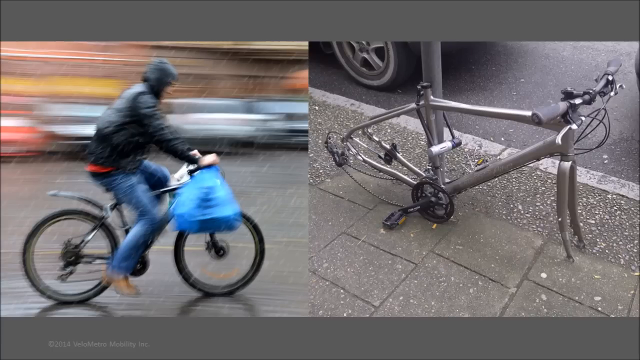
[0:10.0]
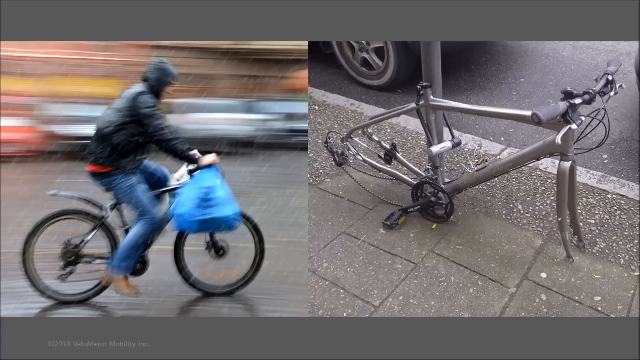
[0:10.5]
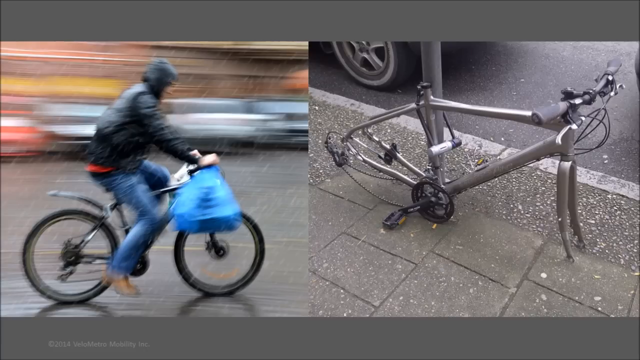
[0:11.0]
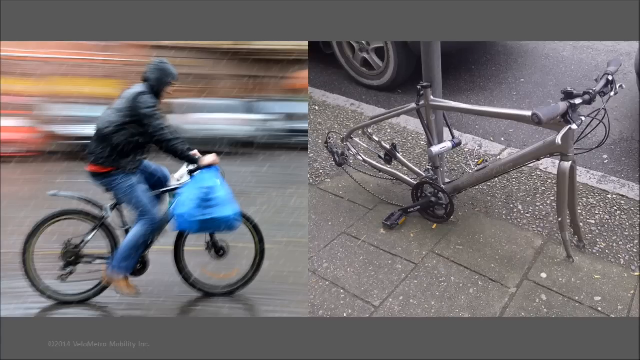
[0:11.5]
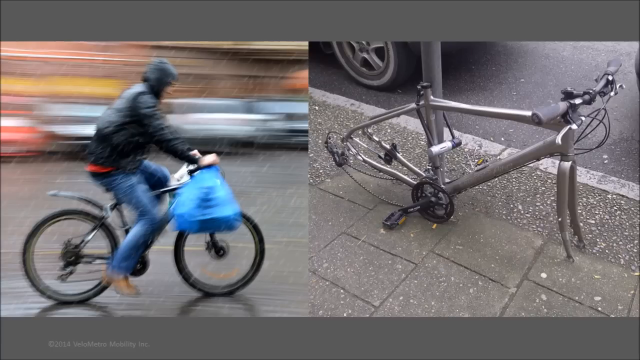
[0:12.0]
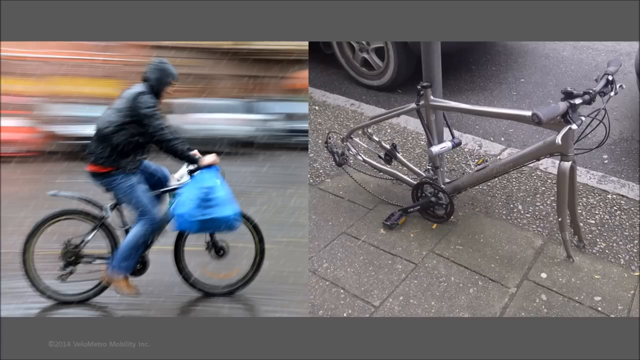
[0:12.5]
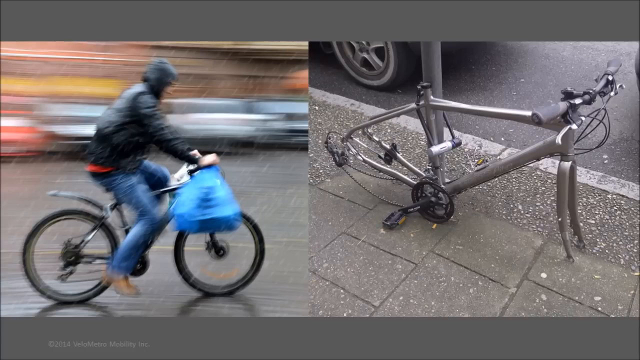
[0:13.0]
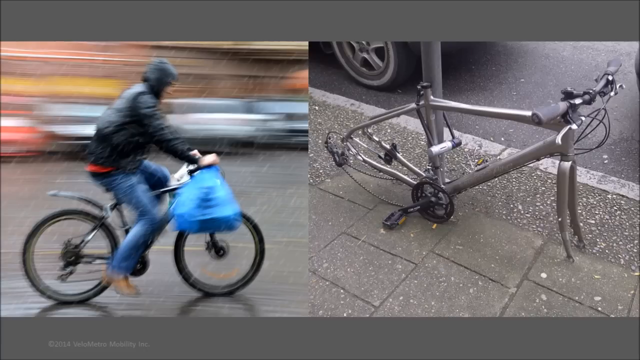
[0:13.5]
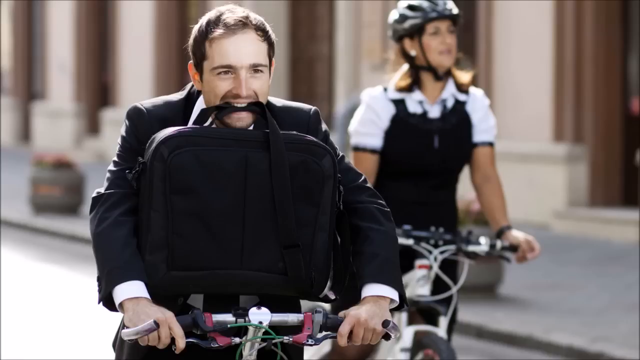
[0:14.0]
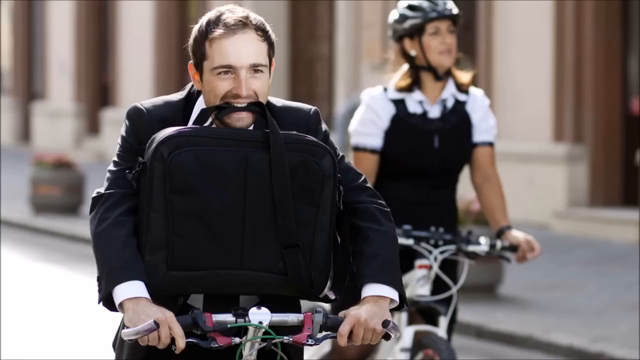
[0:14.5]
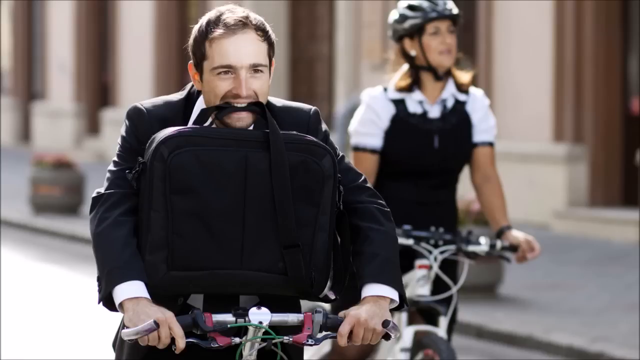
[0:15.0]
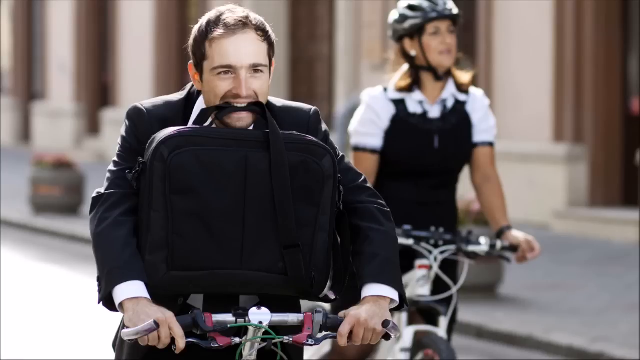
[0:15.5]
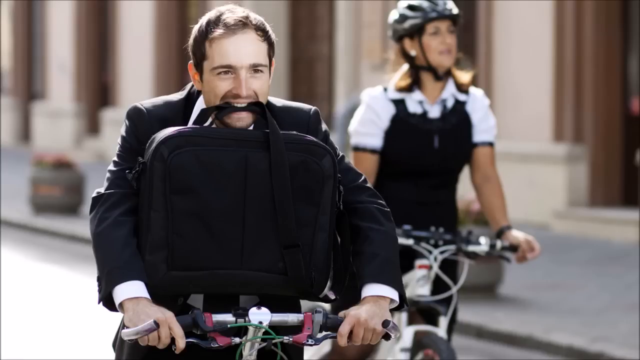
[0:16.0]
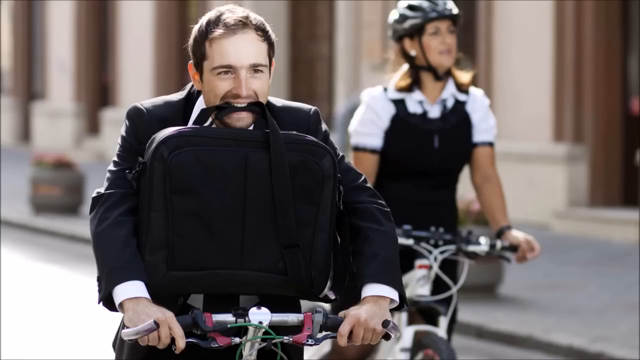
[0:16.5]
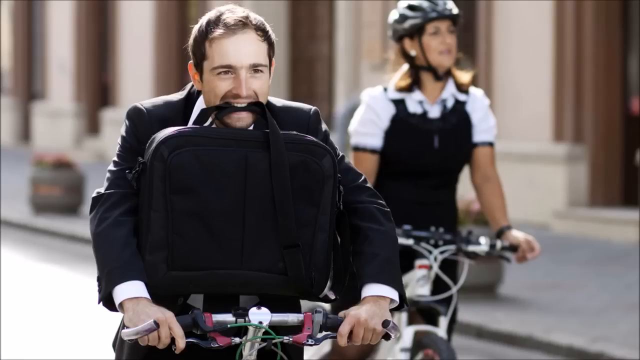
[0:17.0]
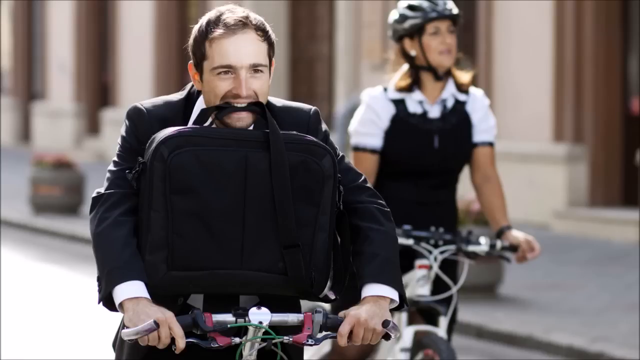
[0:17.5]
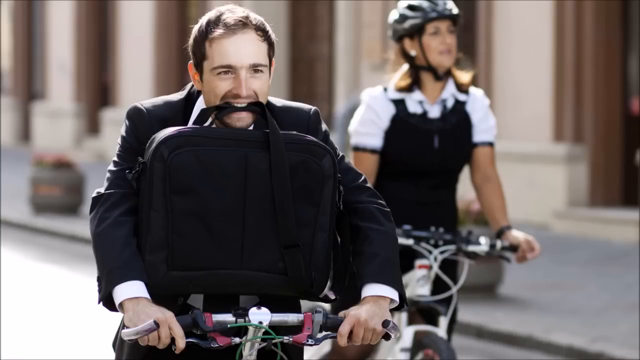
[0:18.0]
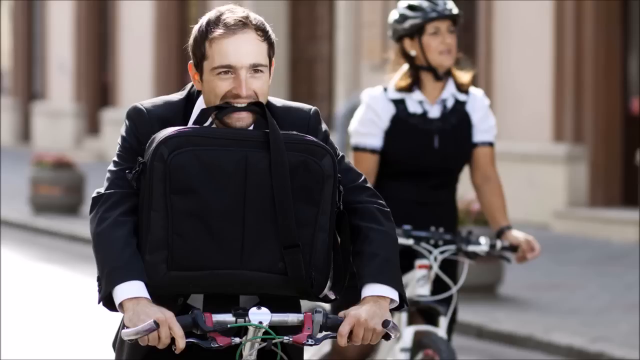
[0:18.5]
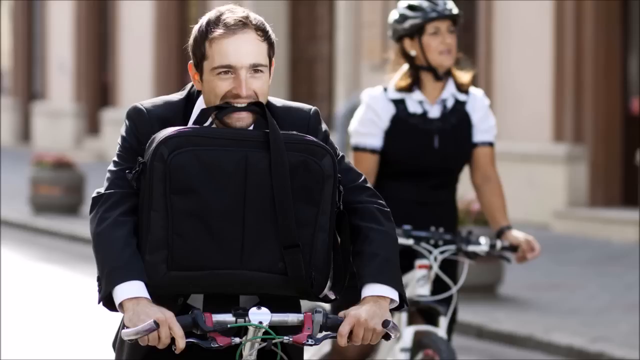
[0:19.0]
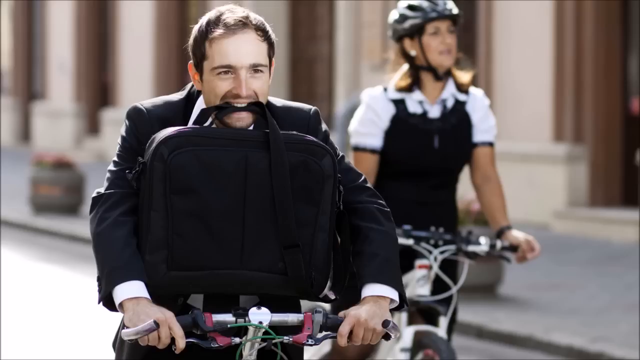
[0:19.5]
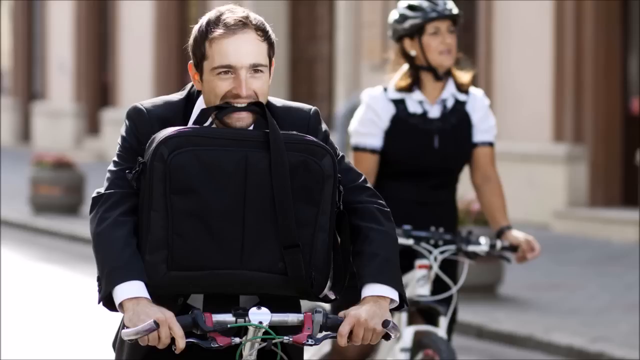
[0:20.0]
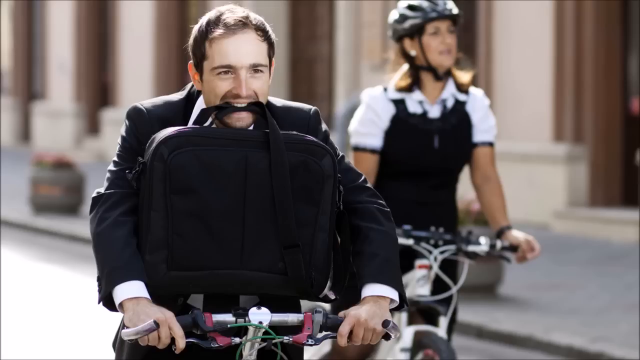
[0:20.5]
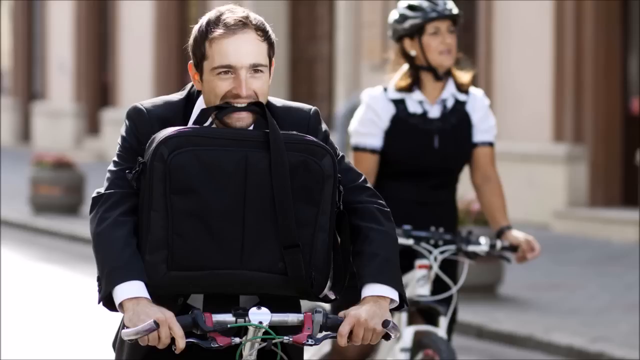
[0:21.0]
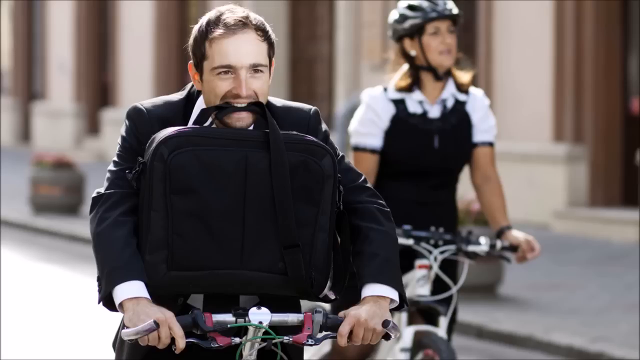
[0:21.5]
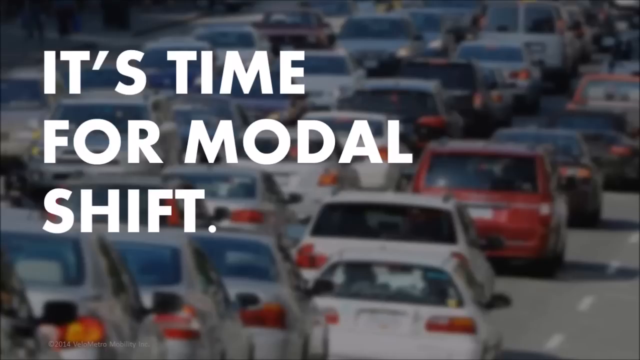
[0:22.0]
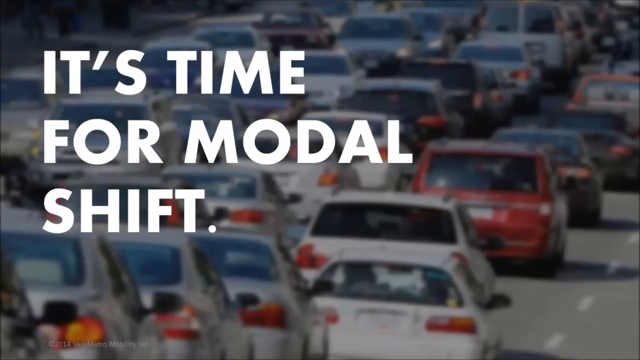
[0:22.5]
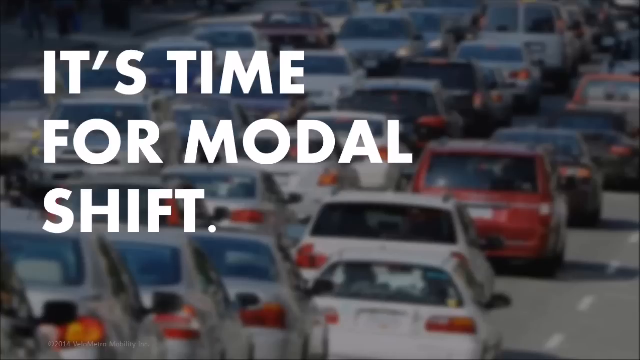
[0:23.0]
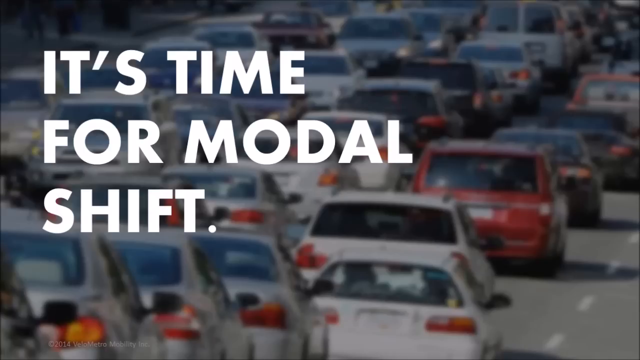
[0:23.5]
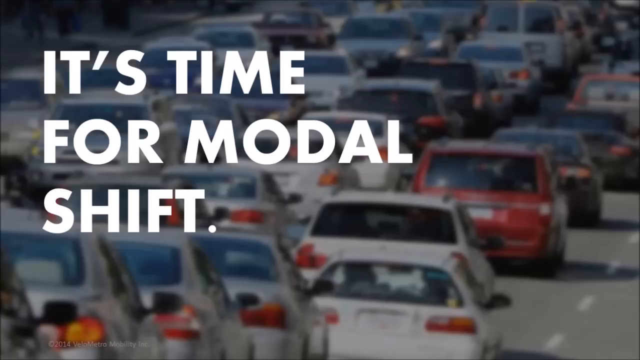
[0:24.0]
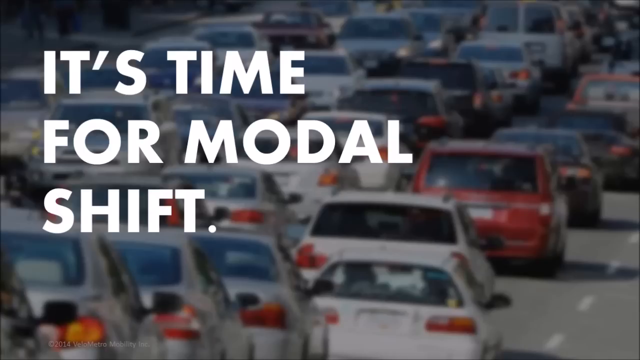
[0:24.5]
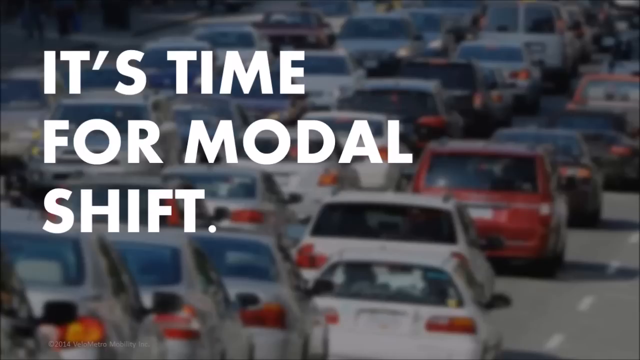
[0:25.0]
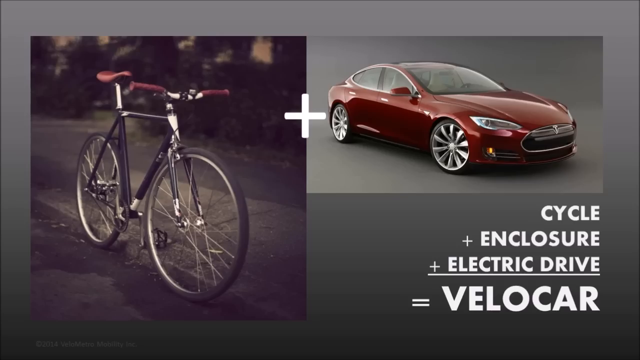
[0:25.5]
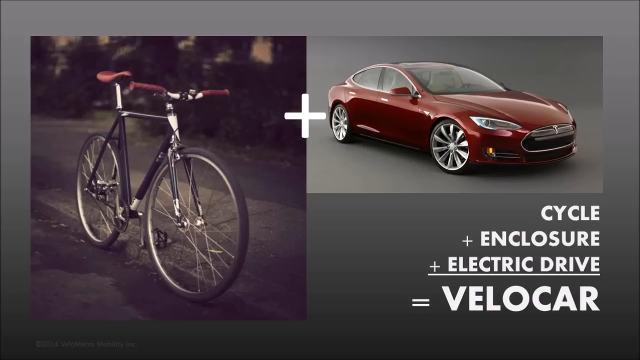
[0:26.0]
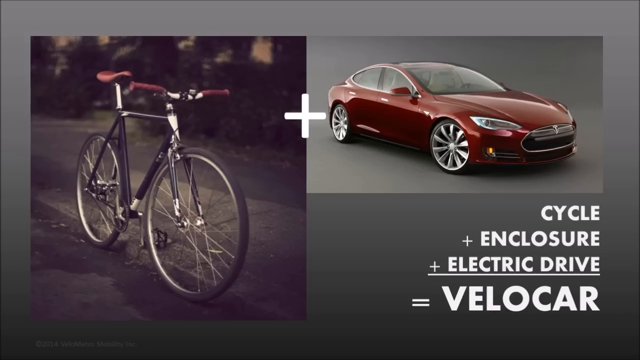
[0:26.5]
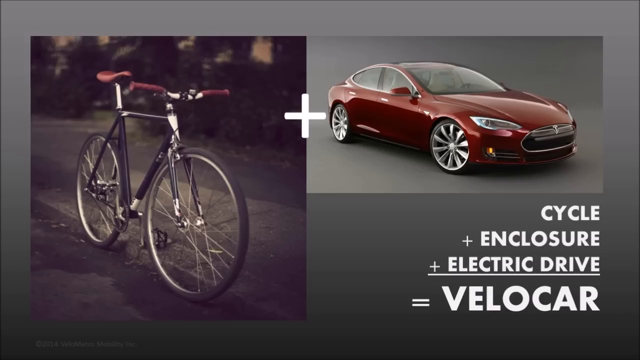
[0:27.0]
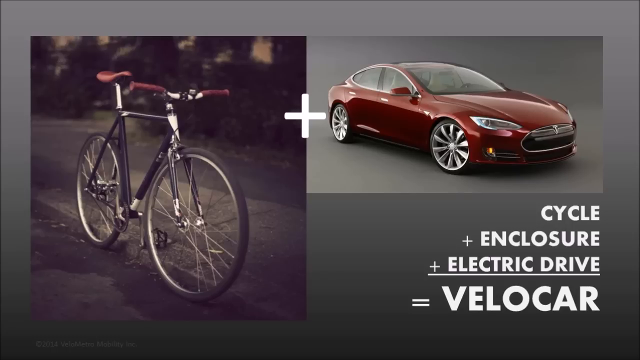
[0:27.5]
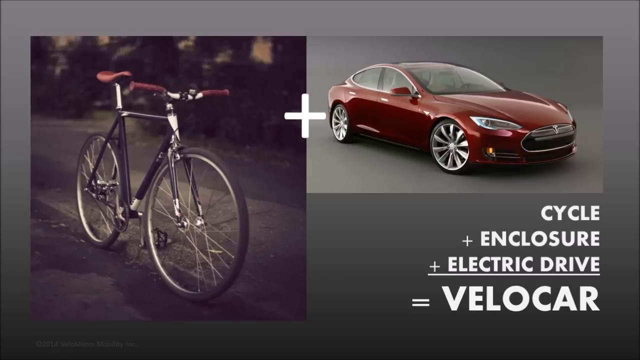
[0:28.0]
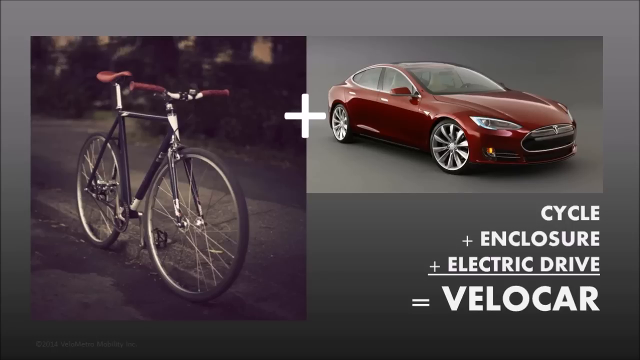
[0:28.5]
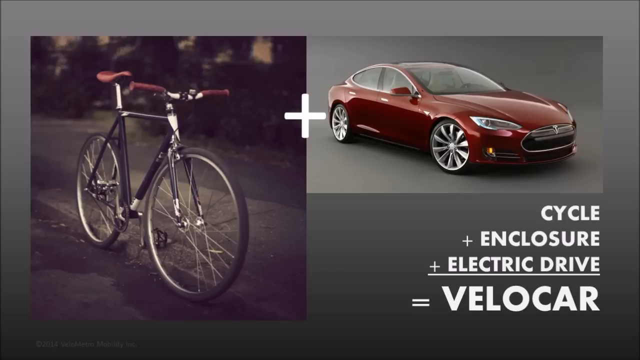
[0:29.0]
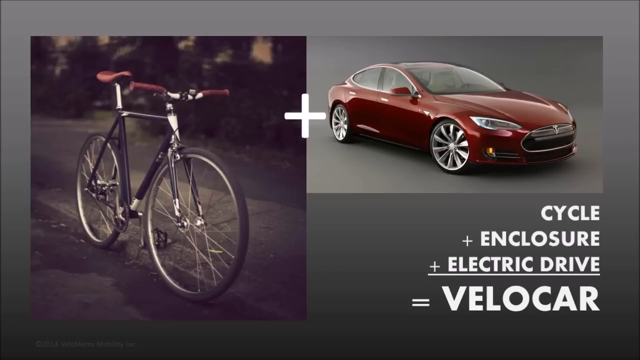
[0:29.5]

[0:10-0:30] A split screen shows a man riding a bike, with parts of the image blurred behind him, holding a blue bag in his hand. The other side shows a bike stripped of everything, chained and locked to a pole on a city street, with a car parked next to it; even the seat is gone. Next, a man in a suit rides a bike with his briefcase in his mouth. A woman who is also dressed up rides next to him, wearing what looks like a black and white dress and a black helmet tied underneath her chin. They go by a big building. The words "it's time for modal shift" come off a screen showing a major traffic jam, with all the cars stopped on a highway. Another split screen shows a bicycle, a plus sign in between, and a car next to it.